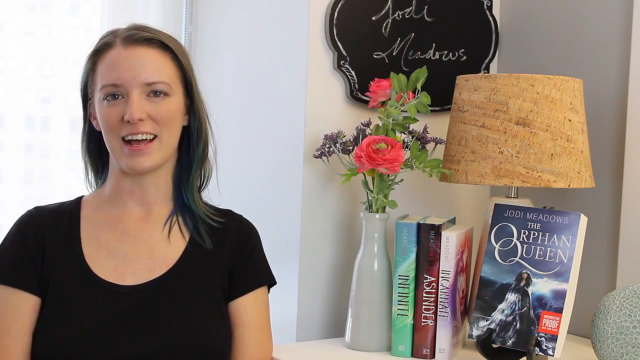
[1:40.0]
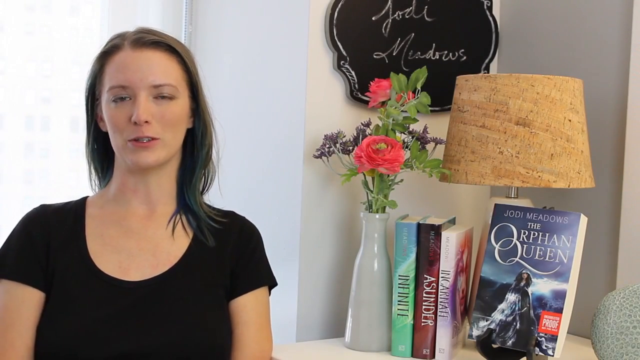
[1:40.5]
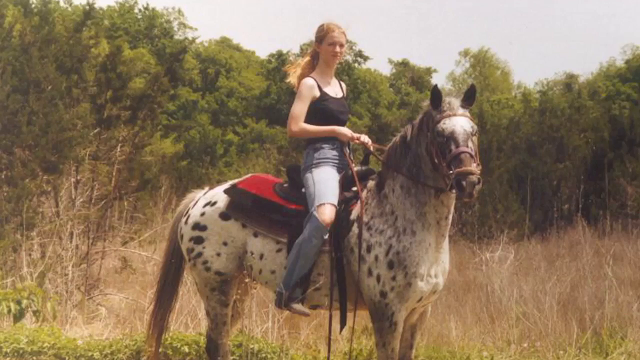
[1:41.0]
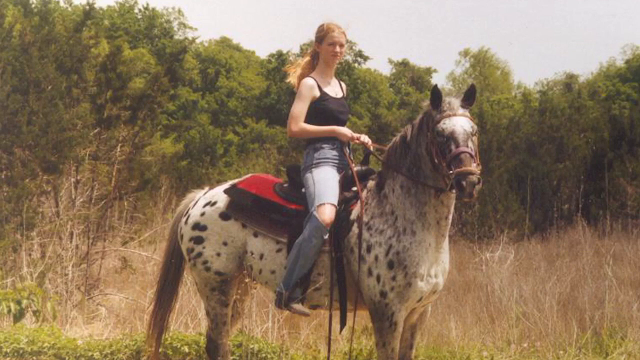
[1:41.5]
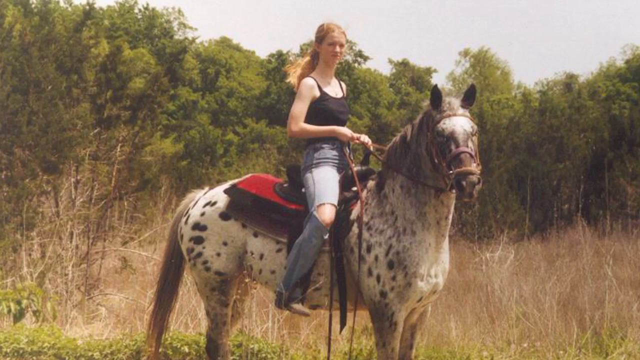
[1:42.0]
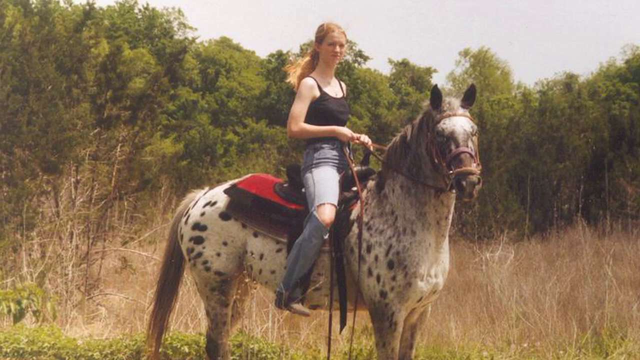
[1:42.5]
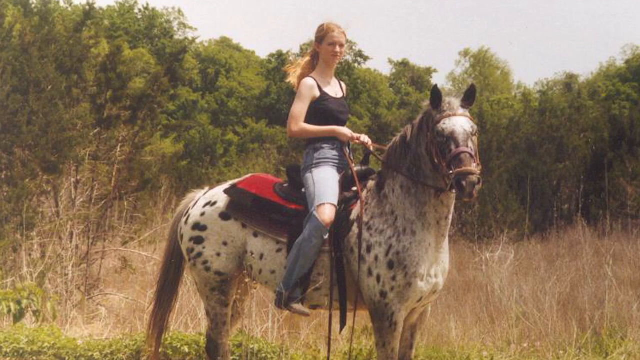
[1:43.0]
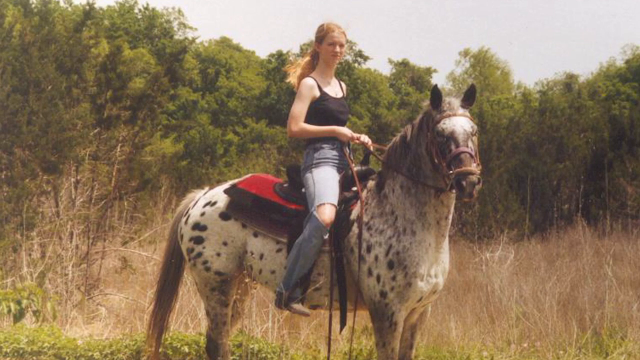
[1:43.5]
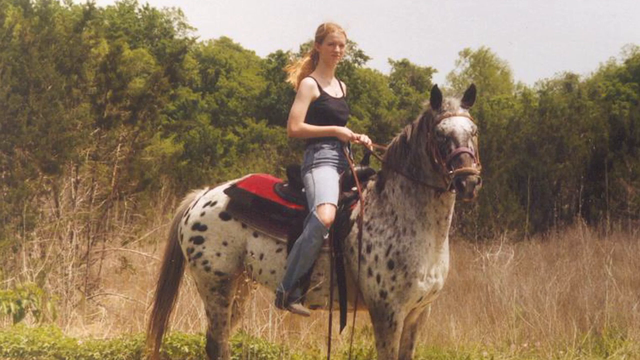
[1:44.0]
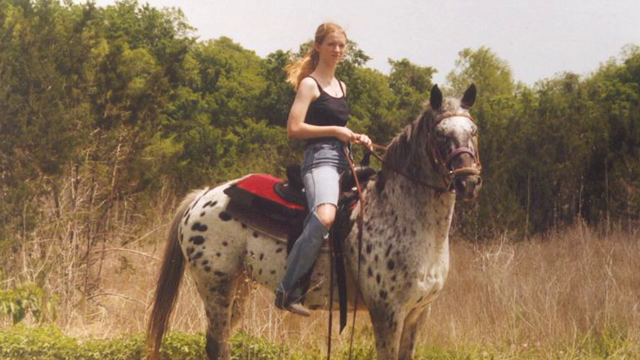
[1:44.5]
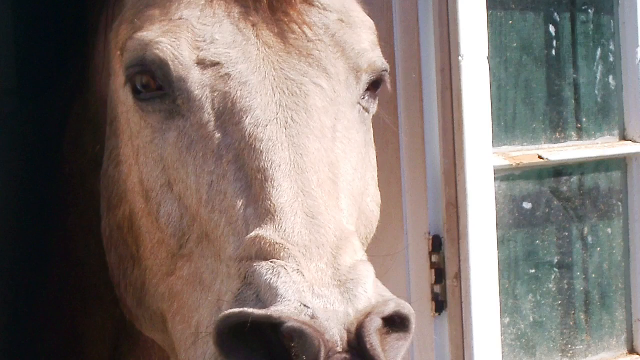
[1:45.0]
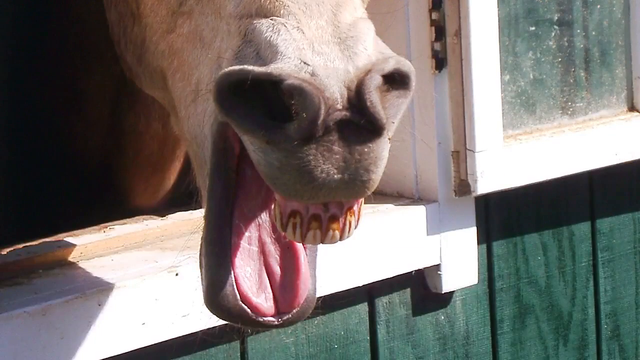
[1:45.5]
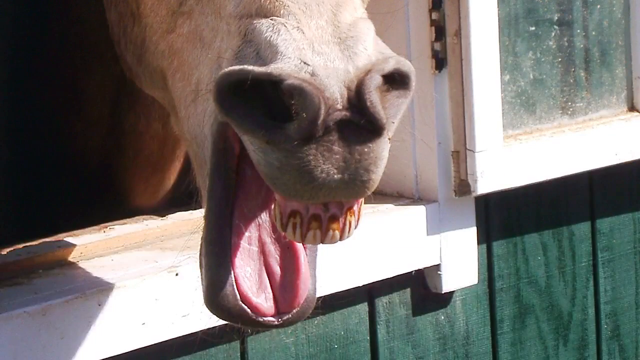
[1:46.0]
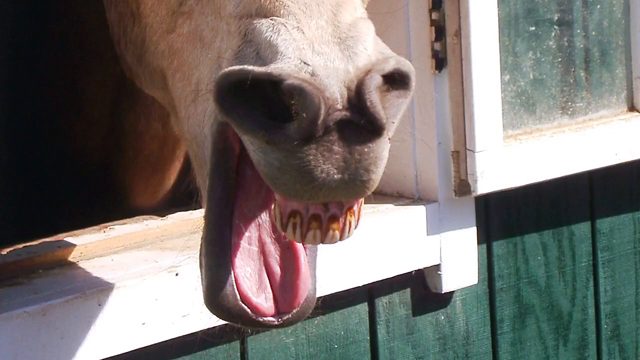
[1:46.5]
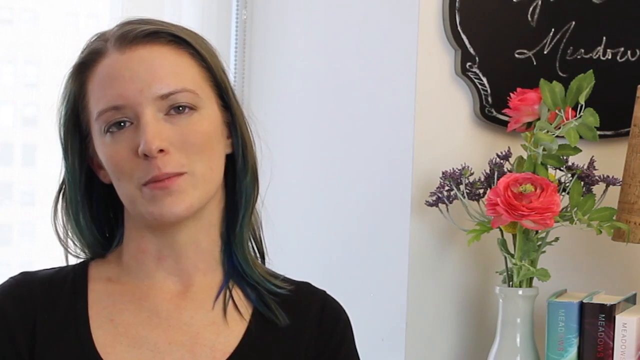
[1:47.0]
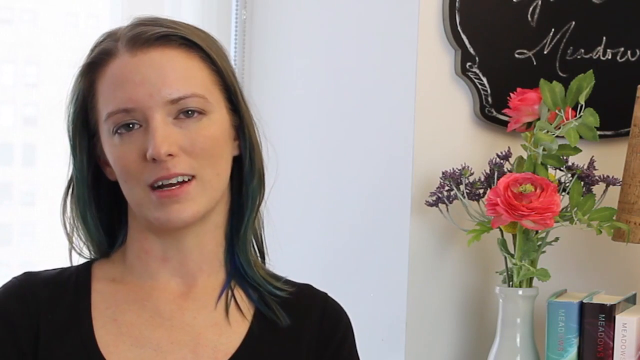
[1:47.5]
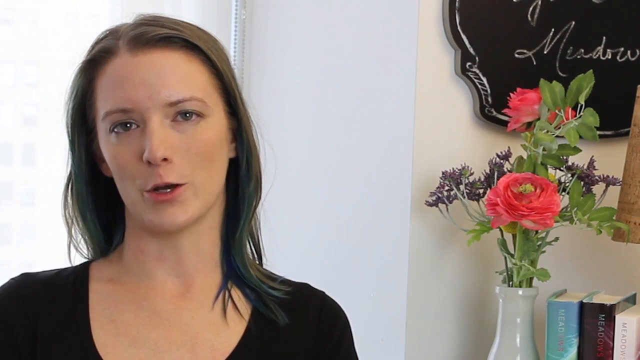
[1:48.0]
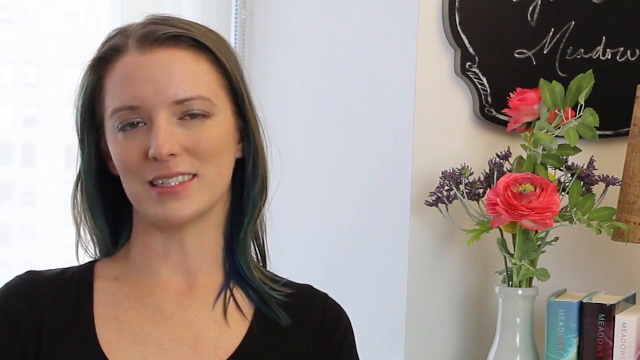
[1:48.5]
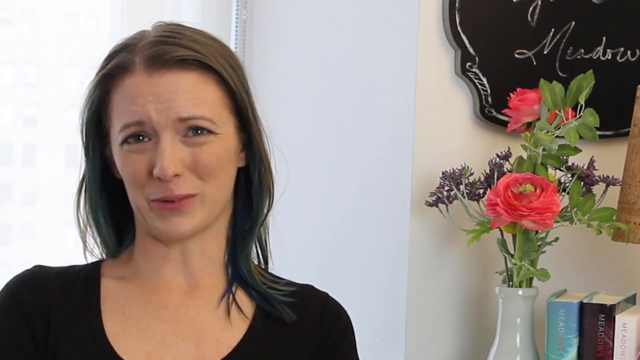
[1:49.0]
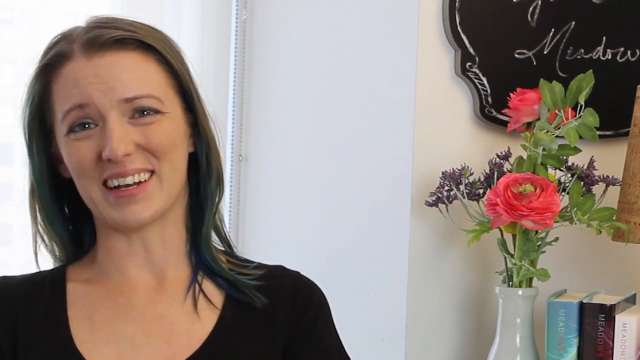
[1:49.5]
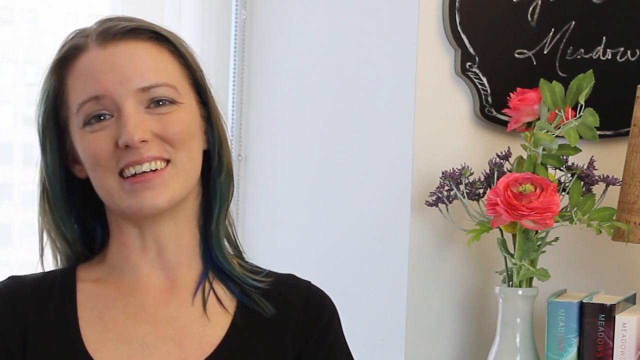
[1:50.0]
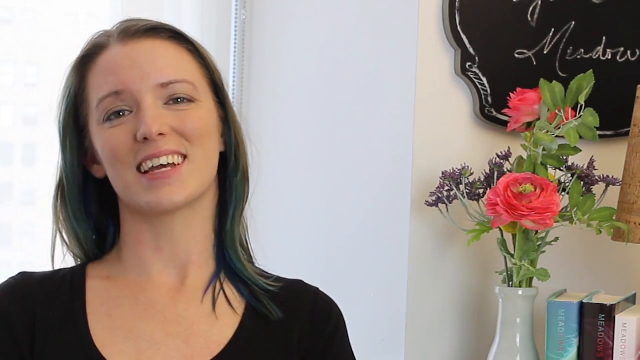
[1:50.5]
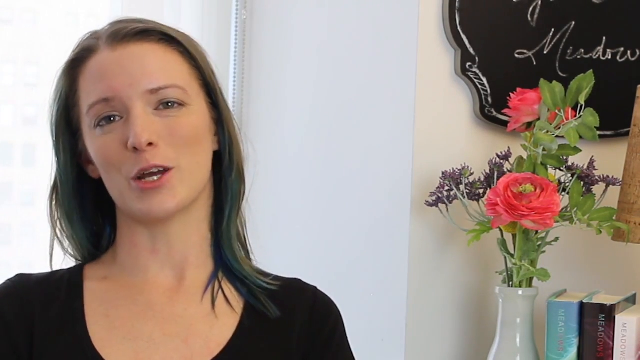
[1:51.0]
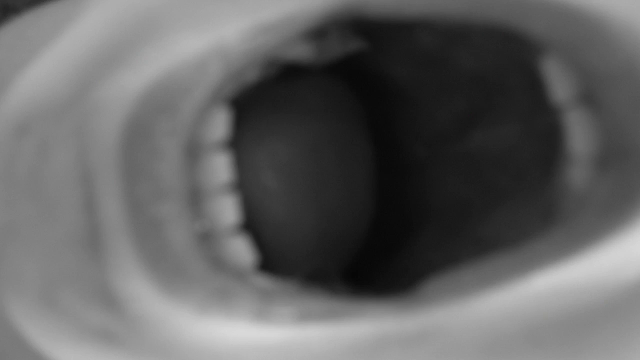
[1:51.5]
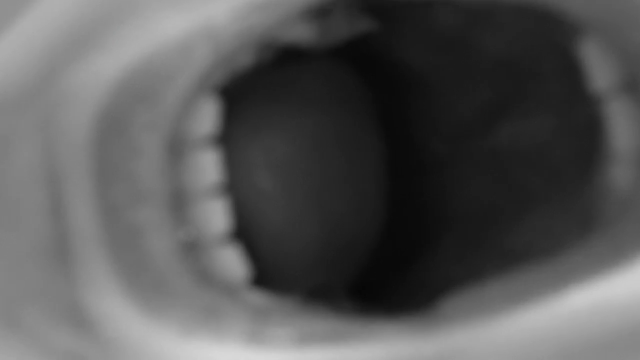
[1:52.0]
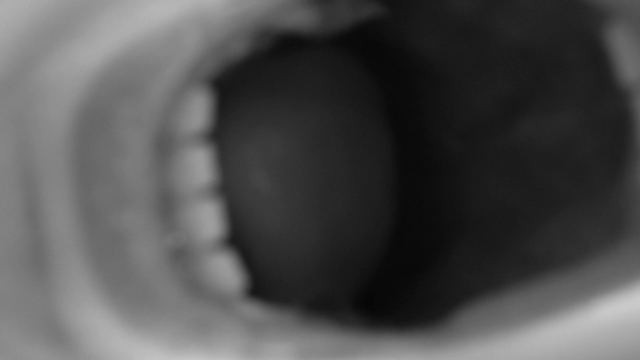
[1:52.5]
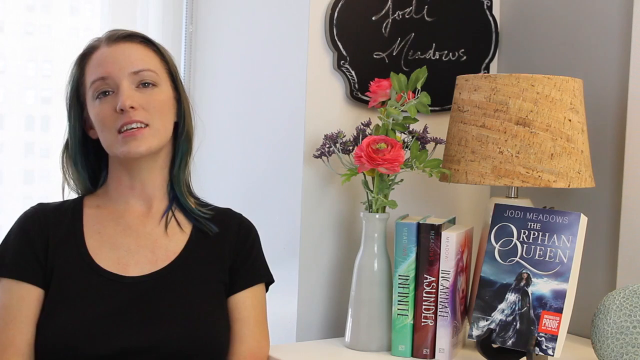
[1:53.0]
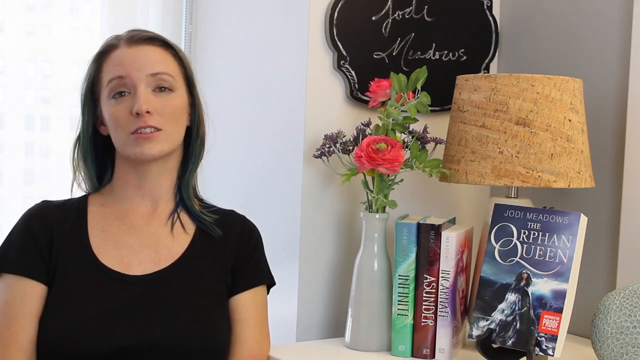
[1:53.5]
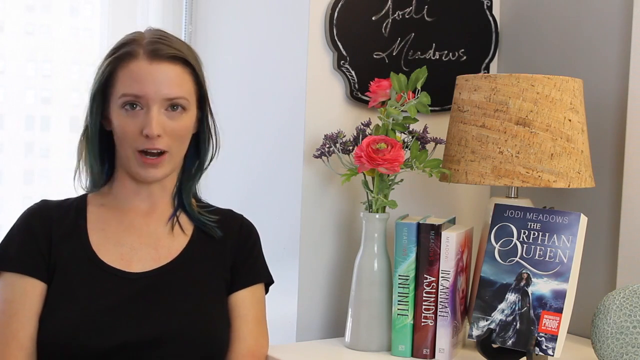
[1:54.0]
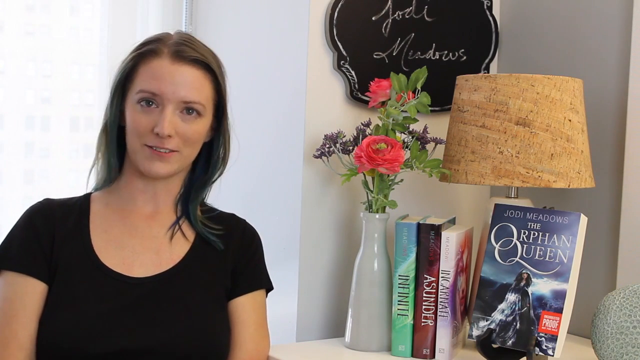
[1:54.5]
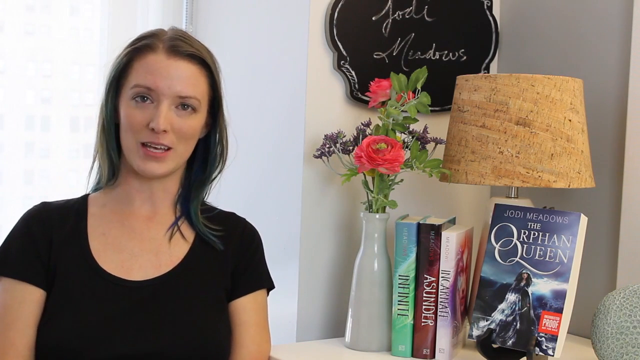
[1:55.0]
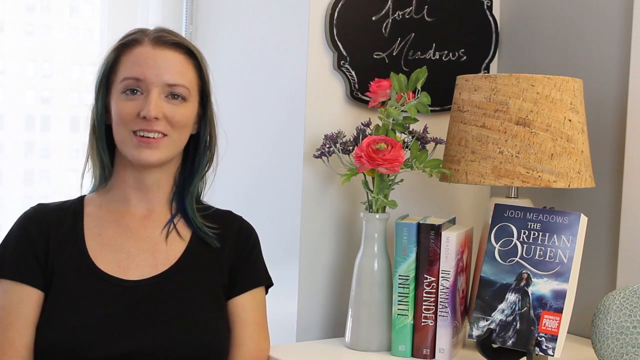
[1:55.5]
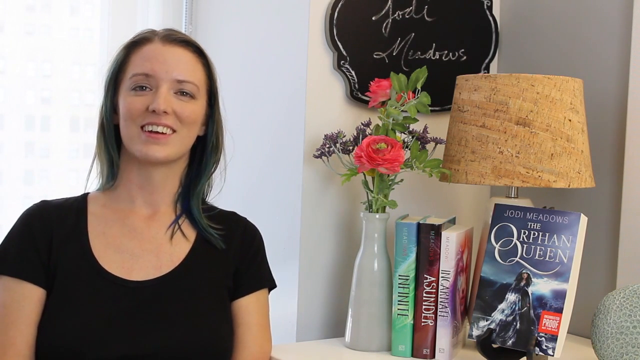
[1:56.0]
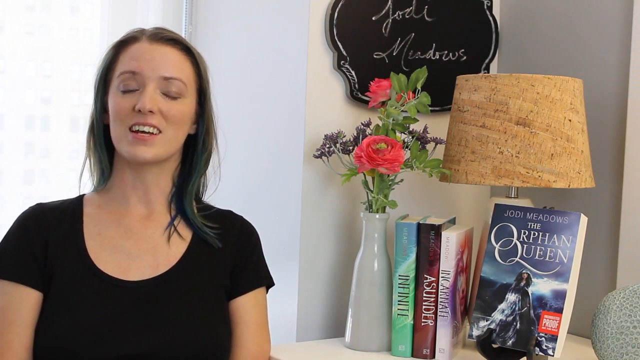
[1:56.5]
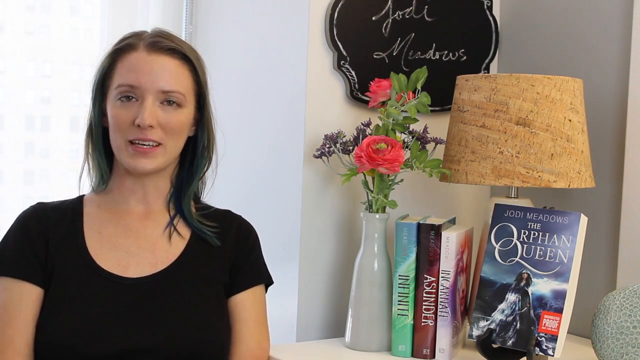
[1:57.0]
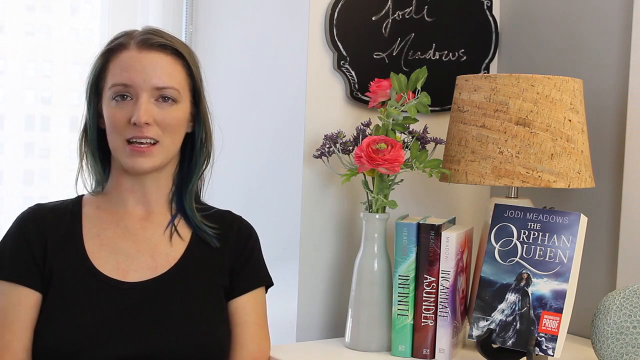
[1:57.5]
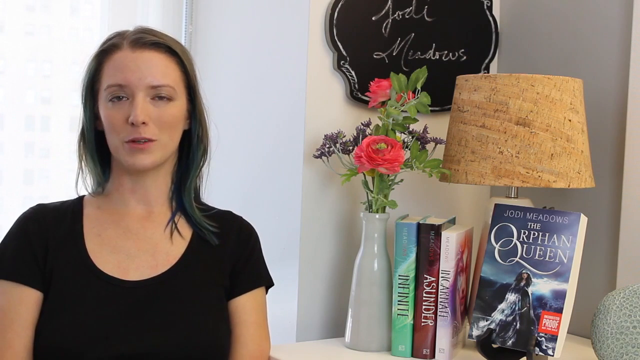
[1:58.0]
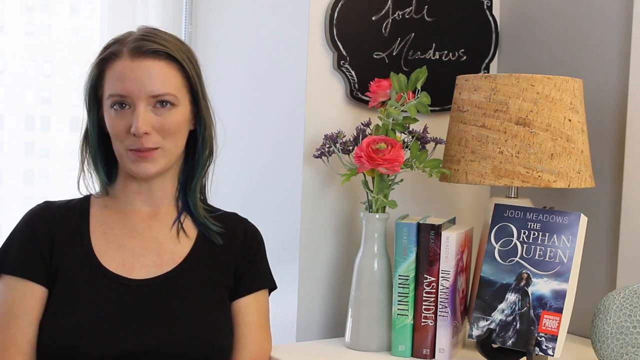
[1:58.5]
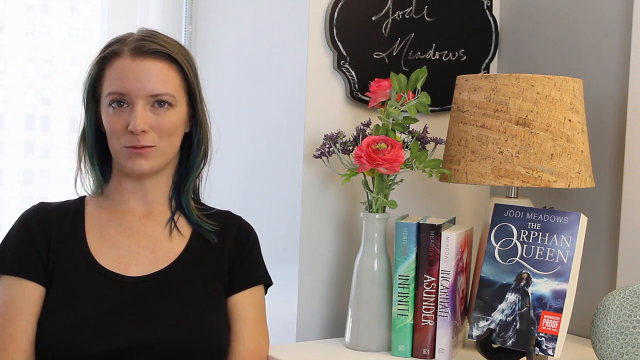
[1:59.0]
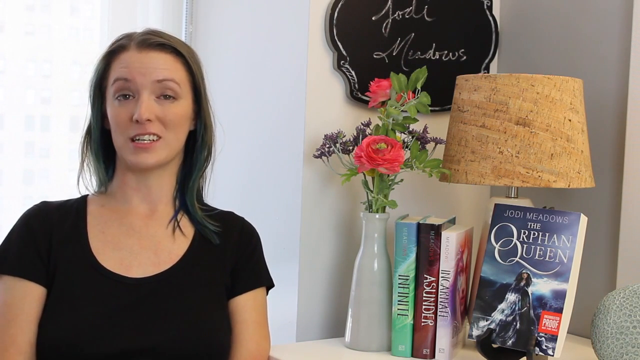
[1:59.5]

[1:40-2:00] A woman sits next to a bookshelf, wearing a short-sleeved black shirt, with long brown hair and brown eyes. The bookshelf holds several books, a small lamp, and a vase with white flowers. On the wall above it is a small blackboard with the name "Jodi Meadows" written in white chalk. One book on the shelf is turned so its cover faces the camera: The Orphan Queen by Jodi Meadows. The video cuts to a woman in a black sleeveless shirt, jean shorts and gray boots sitting on top of a horse. The horse is white with brown spots and a brown mane. She sits on a red and black saddle and holds the reins; her long brown hair is tied into a ponytail. The horse is in a wooded area with tall grass and many tall trees in the background. Next is a close-up of the horse with its mouth open, showing its teeth and tongue, its face hanging out of an open window in a green barn-like building. The video cuts back to the woman next to the bookshelf, who smiles and speaks, then to a black and white close-up of a person's wide-open mouth showing lips and teeth. It cuts back to the woman next to the bookshelf, who continues speaking.